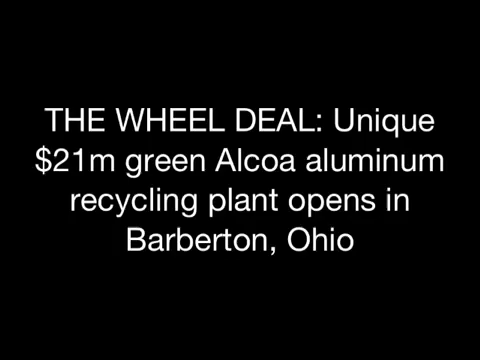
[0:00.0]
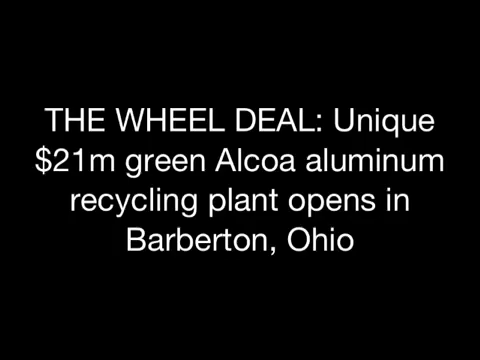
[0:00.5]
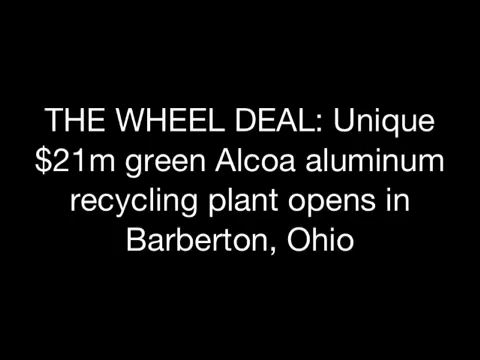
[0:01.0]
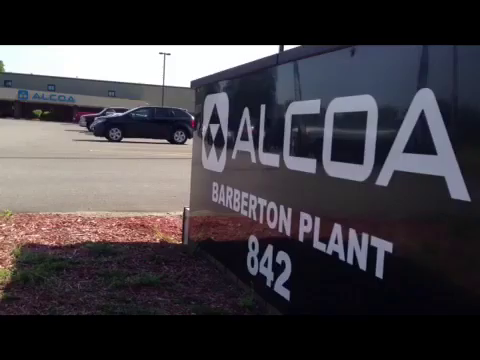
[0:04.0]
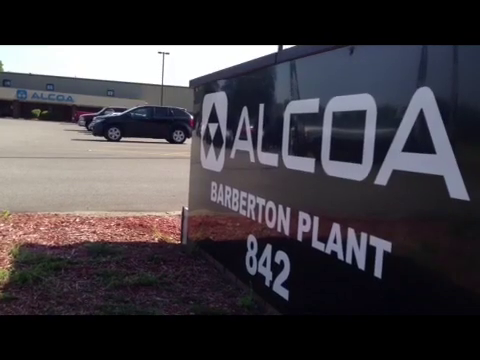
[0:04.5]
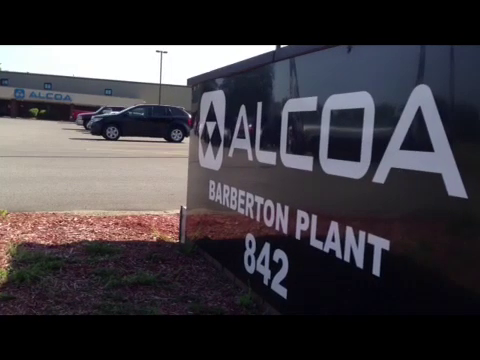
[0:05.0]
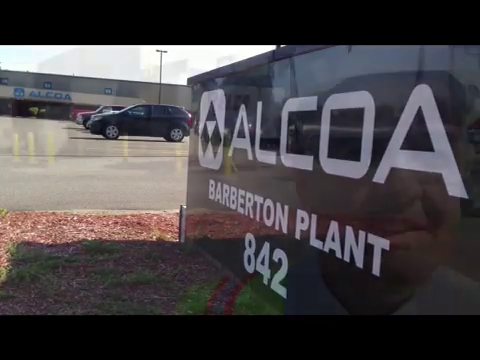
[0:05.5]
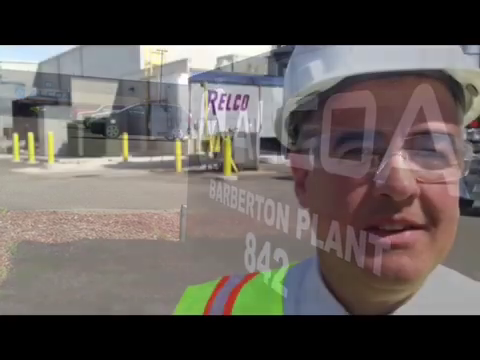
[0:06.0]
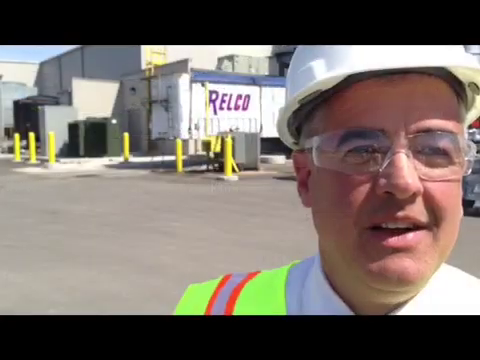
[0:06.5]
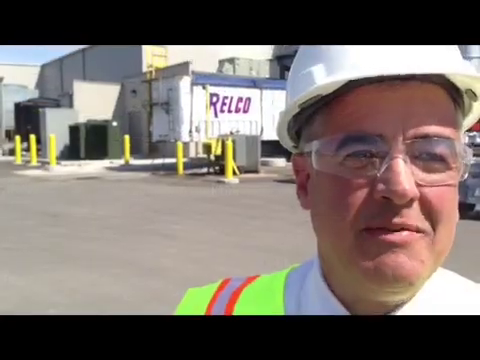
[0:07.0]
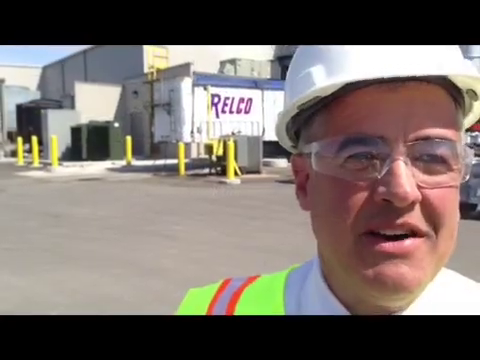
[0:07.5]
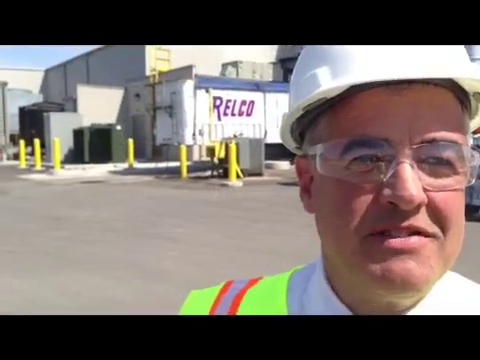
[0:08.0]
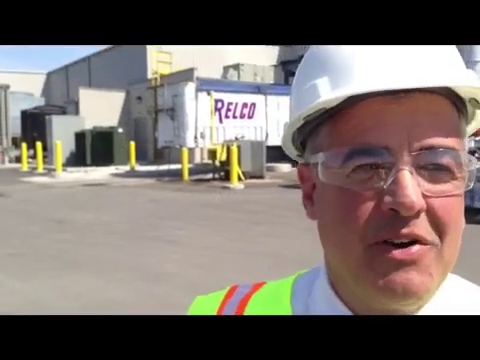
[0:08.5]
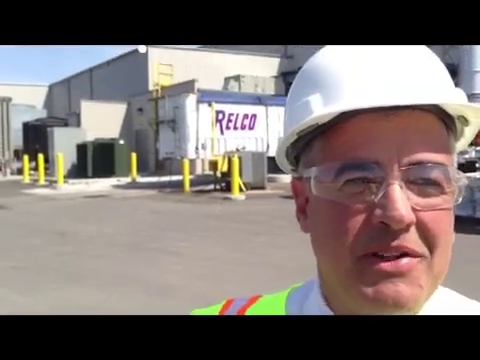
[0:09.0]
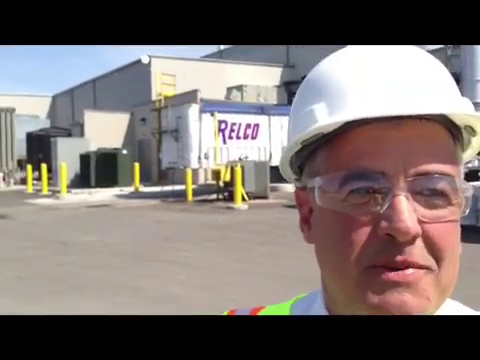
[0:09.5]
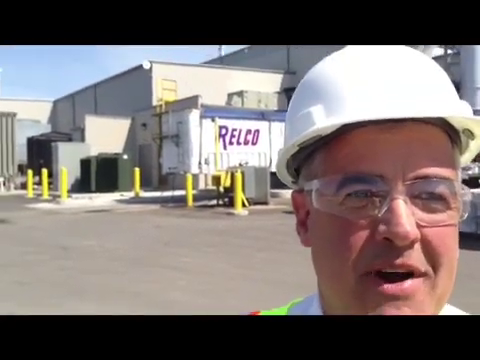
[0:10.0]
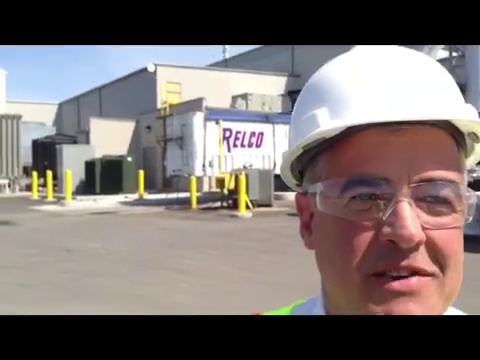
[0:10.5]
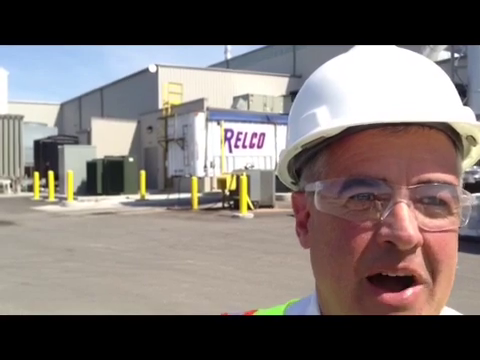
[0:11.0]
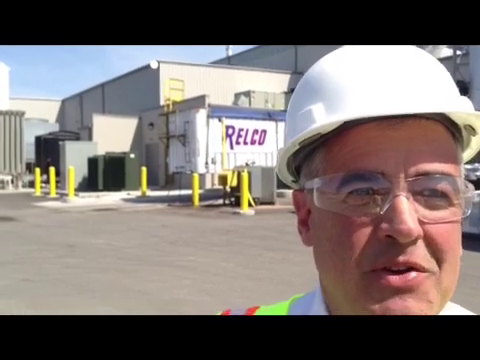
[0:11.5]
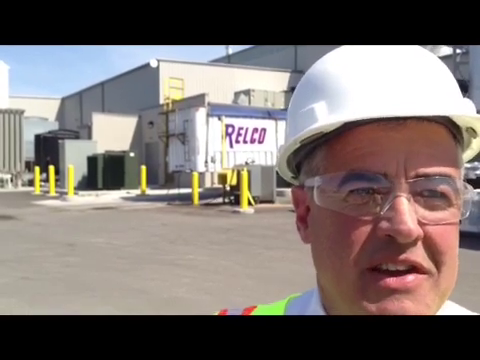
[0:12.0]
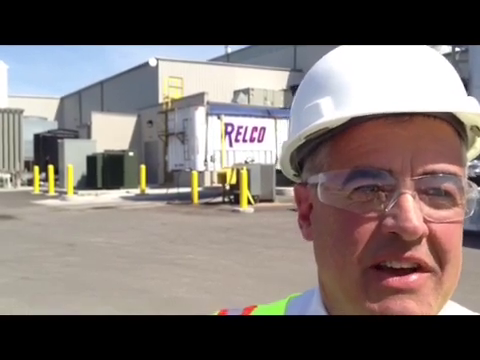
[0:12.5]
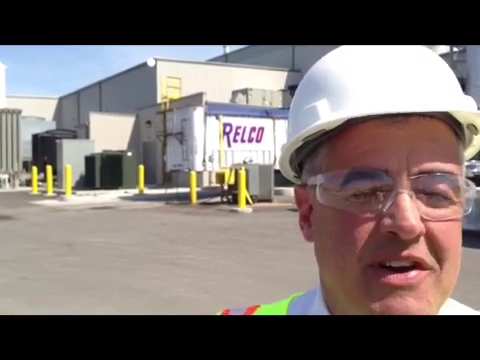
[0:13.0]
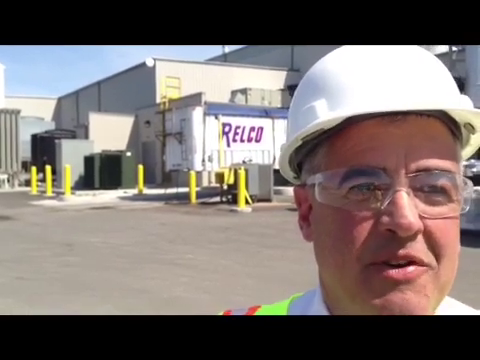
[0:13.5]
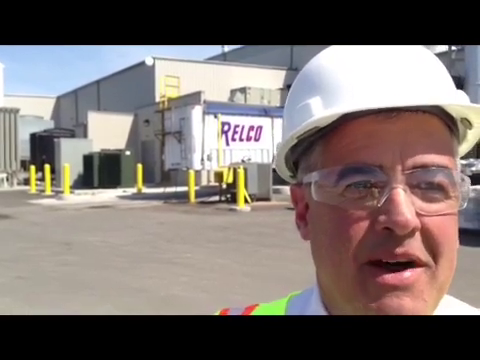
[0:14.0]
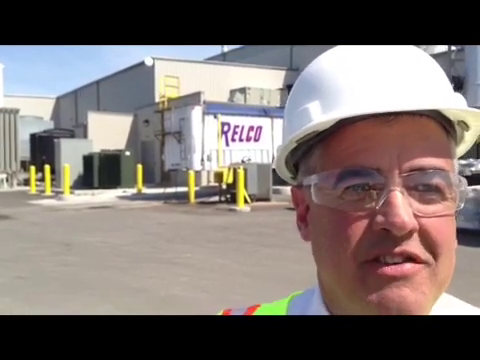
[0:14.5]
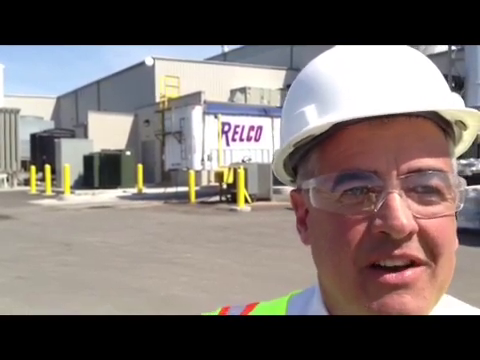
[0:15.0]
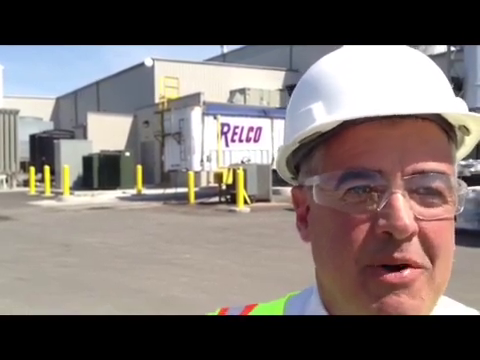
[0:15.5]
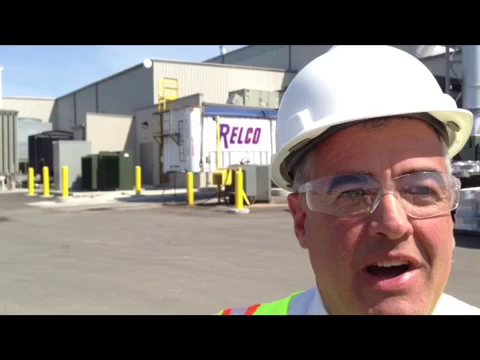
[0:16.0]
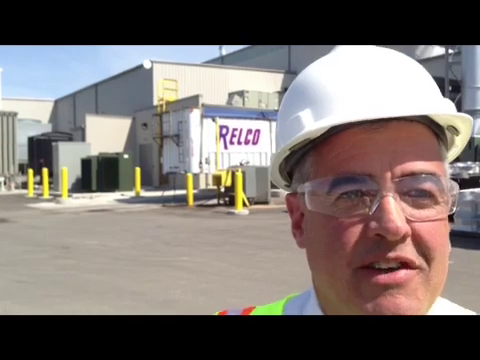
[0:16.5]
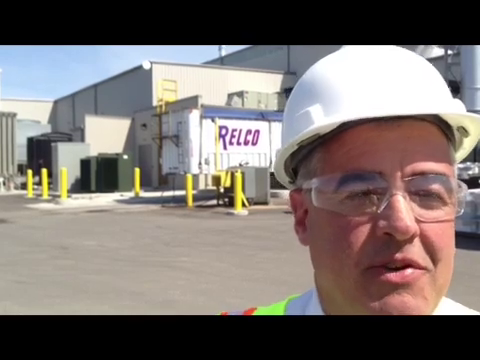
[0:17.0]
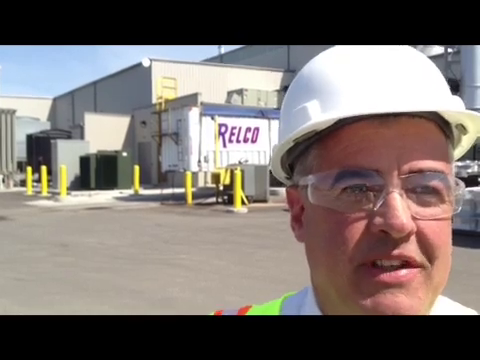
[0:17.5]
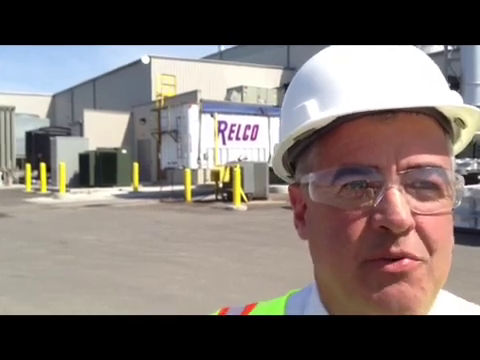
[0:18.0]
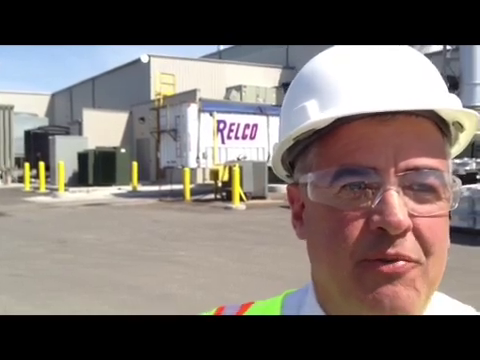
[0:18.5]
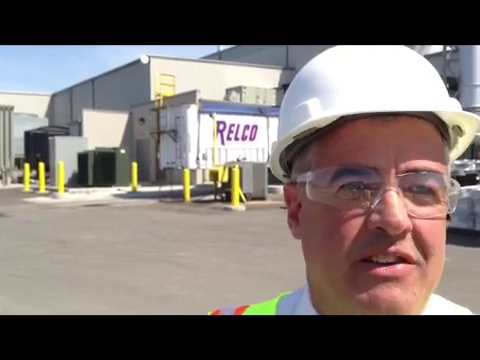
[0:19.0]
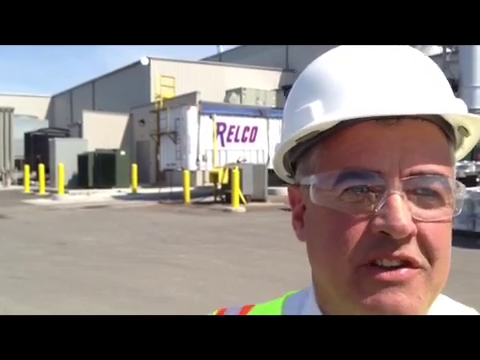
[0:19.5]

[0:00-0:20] A black screen shows white text reading "the wheel deal: unique $21 million green Alcoa aluminum recycling plant opens in Barberton, Ohio." The video cuts to a sign bearing the Alcoa logo, and underneath the logo it reads "Barberton plant number 842." A parking lot with some cars and the entrance to the Alcoa factory are visible. Next, a man wearing a high-vis jacket, safety glasses and a helmet talks to the camera while standing in front of the factory; the word "RELCO" is on the side of the building, and there are some yellow bollards in the background.